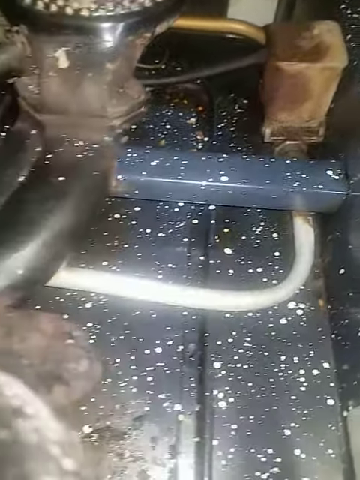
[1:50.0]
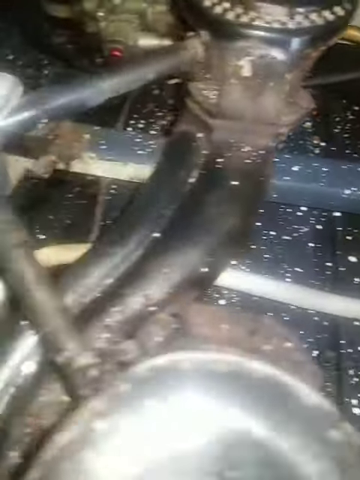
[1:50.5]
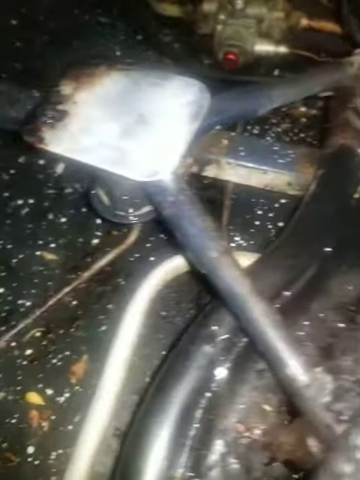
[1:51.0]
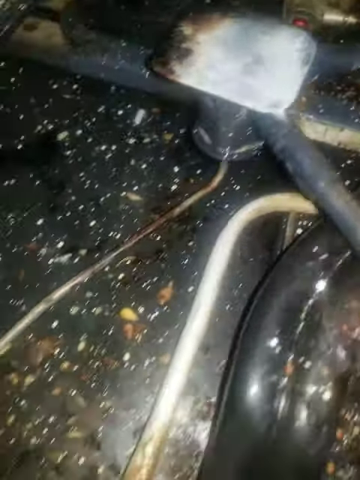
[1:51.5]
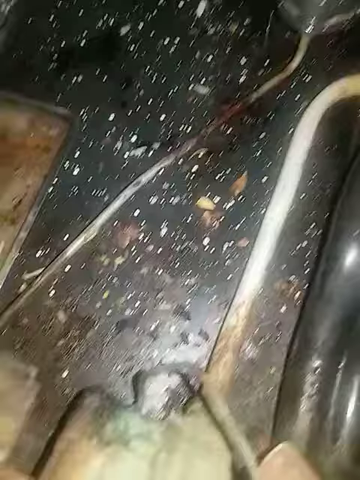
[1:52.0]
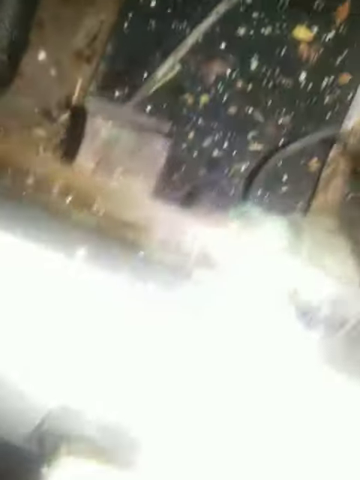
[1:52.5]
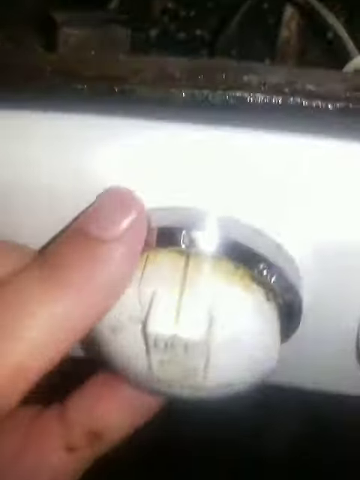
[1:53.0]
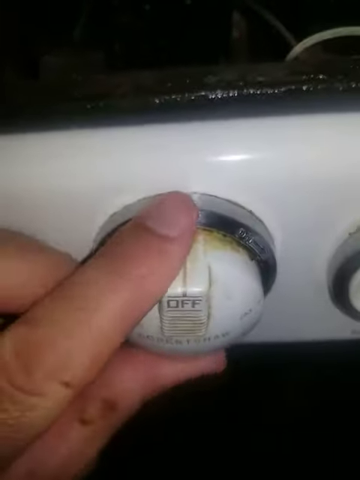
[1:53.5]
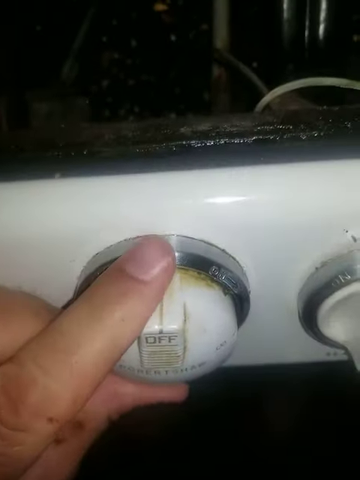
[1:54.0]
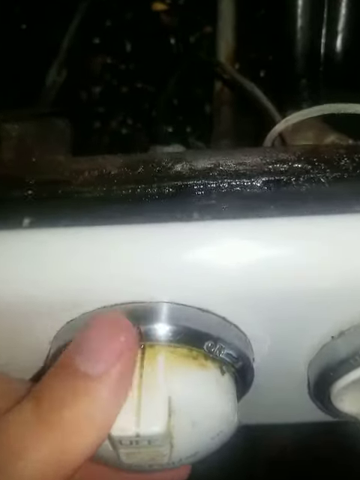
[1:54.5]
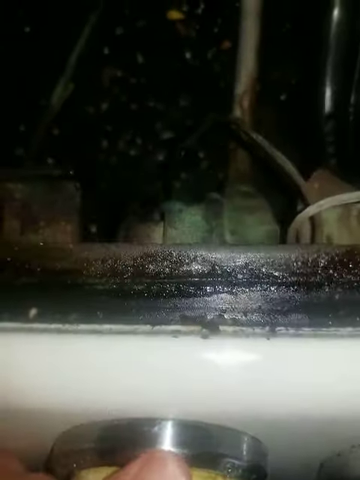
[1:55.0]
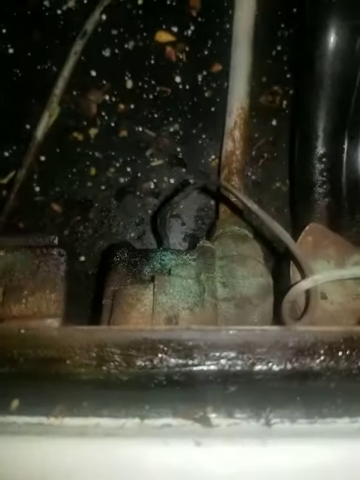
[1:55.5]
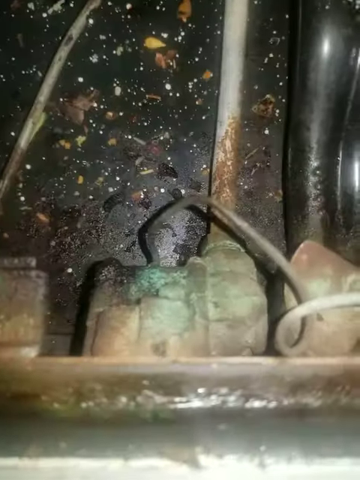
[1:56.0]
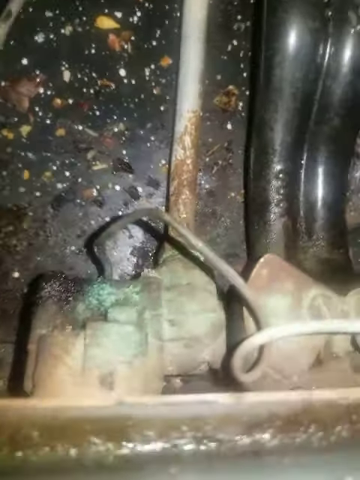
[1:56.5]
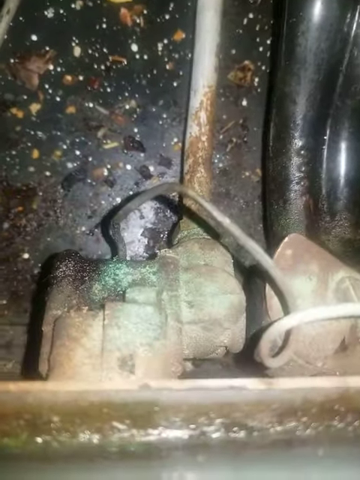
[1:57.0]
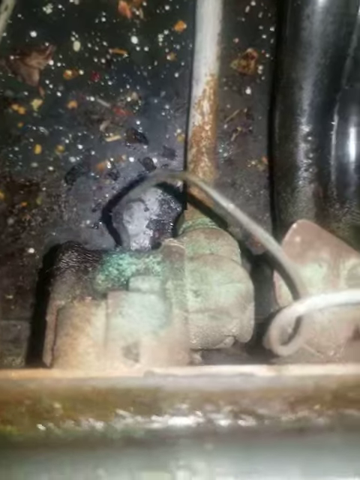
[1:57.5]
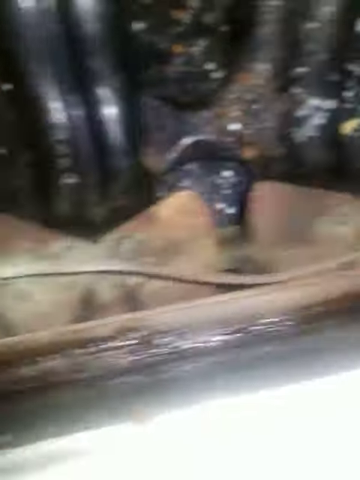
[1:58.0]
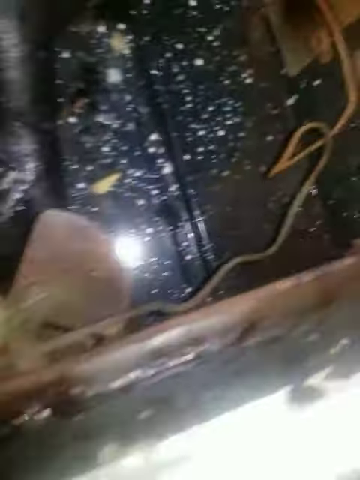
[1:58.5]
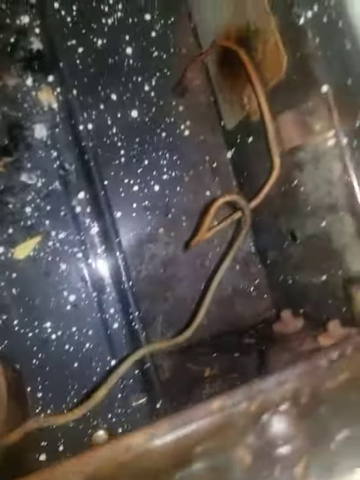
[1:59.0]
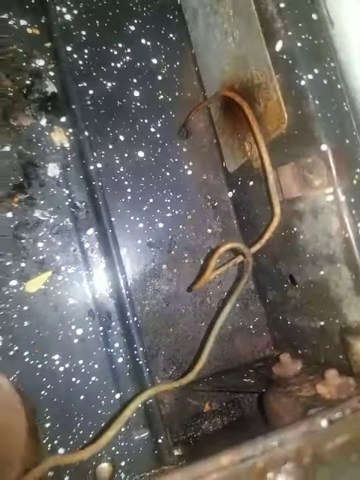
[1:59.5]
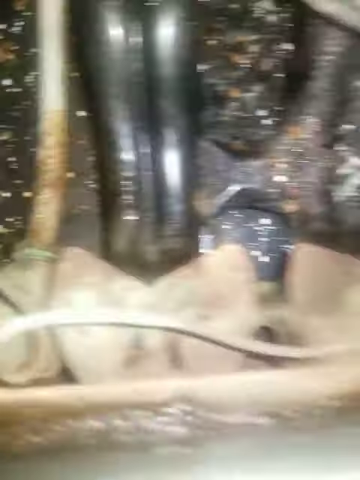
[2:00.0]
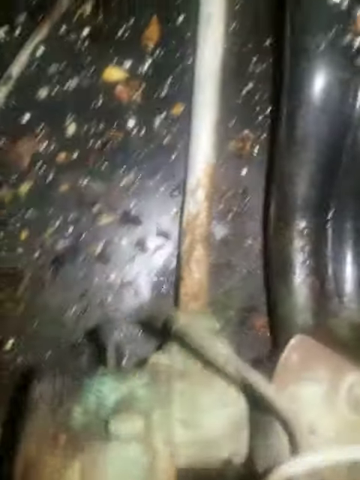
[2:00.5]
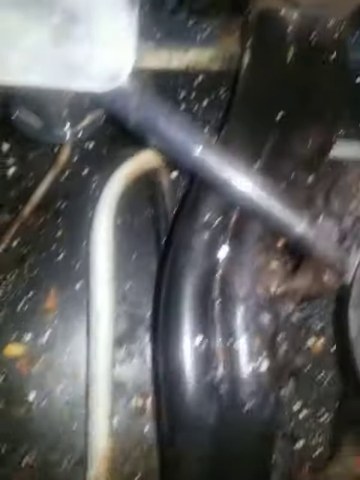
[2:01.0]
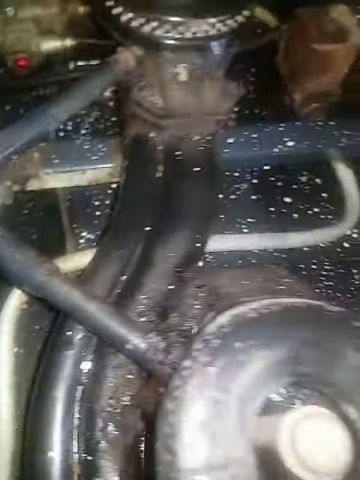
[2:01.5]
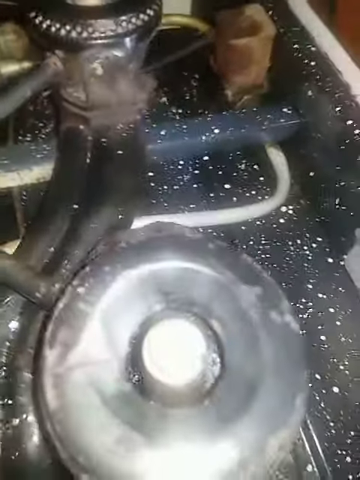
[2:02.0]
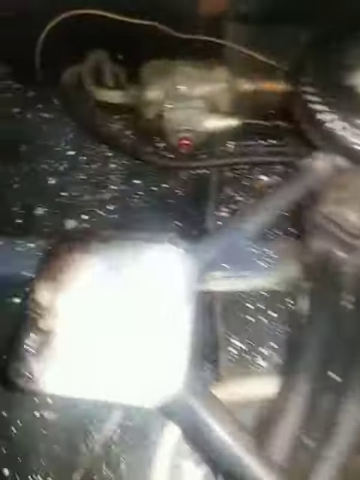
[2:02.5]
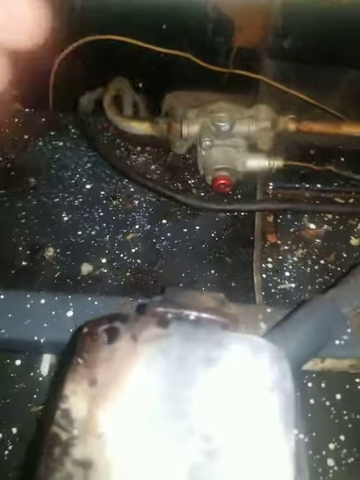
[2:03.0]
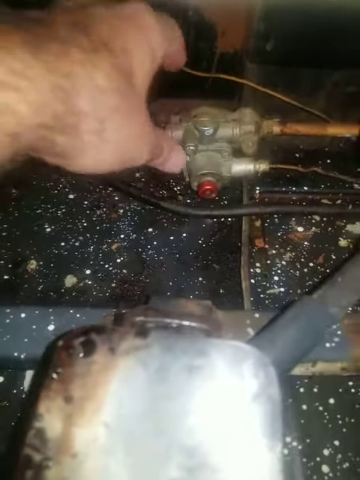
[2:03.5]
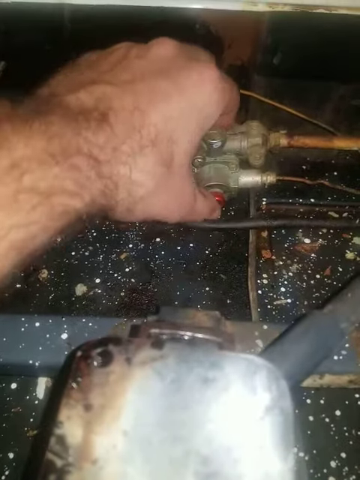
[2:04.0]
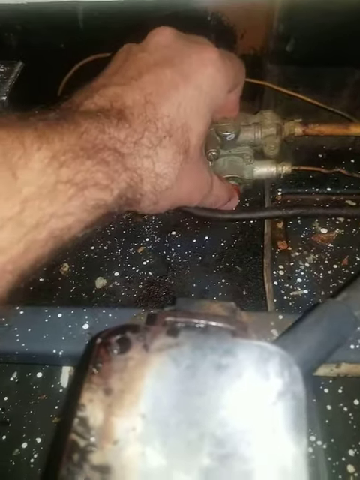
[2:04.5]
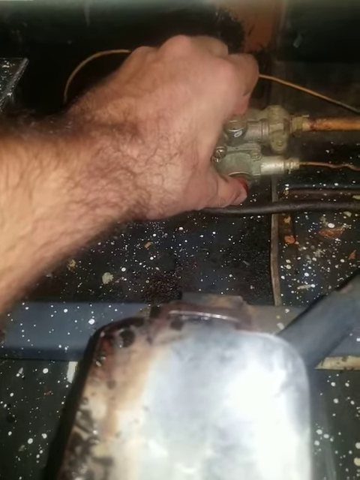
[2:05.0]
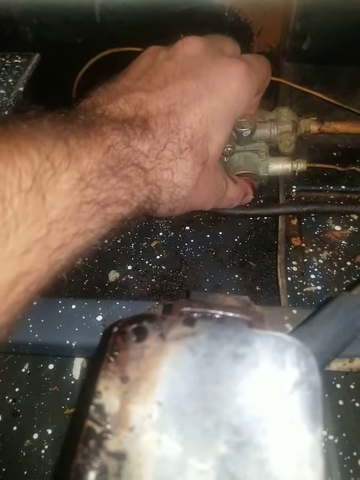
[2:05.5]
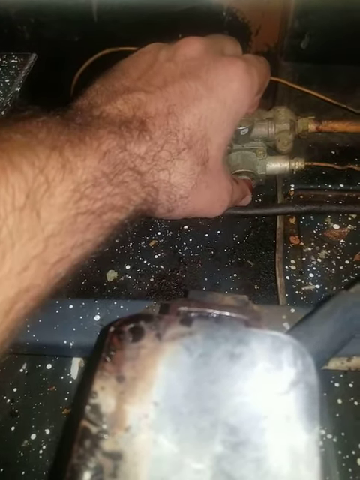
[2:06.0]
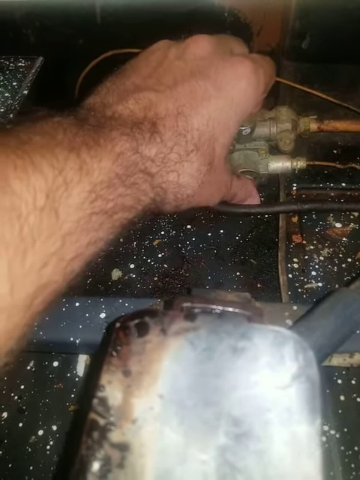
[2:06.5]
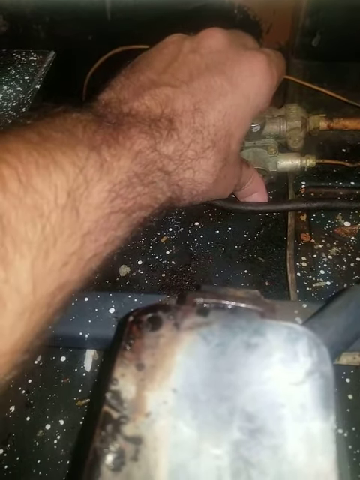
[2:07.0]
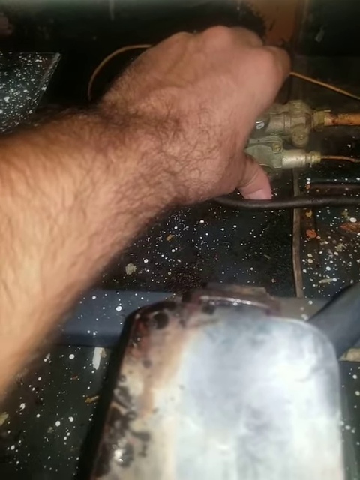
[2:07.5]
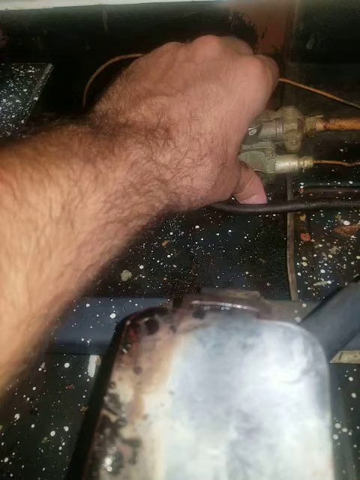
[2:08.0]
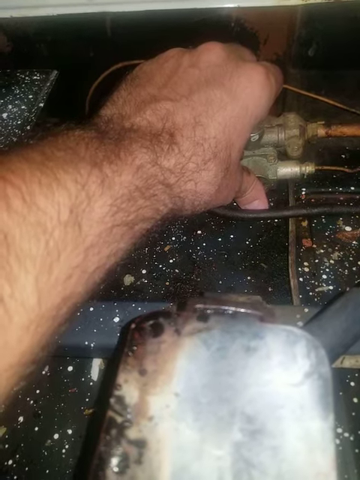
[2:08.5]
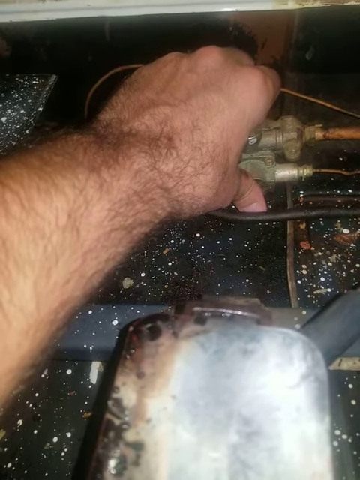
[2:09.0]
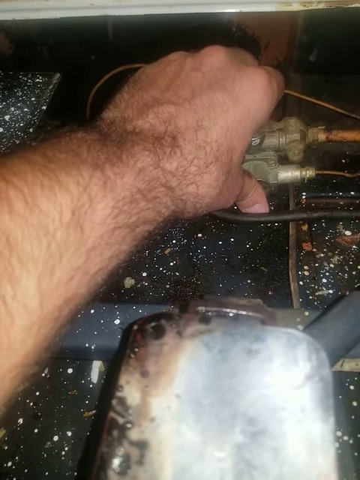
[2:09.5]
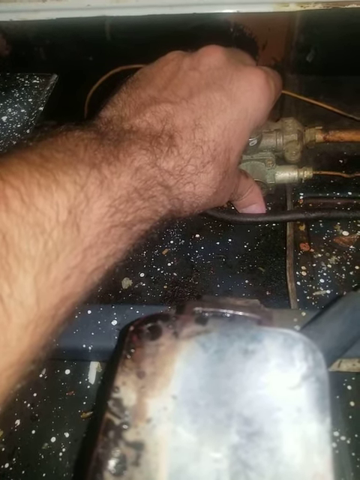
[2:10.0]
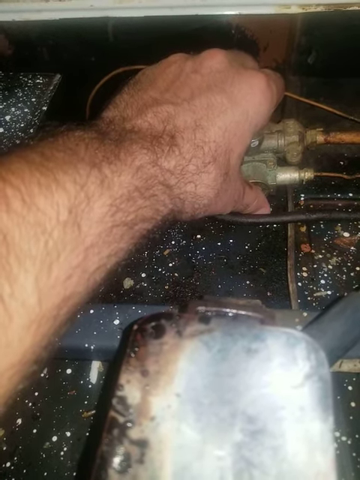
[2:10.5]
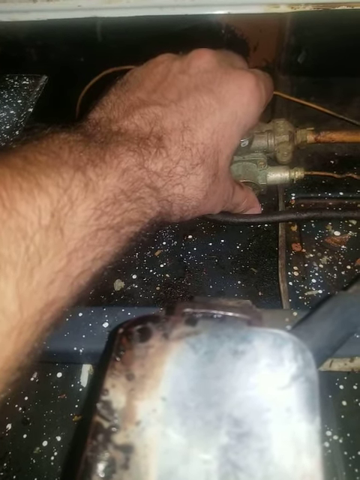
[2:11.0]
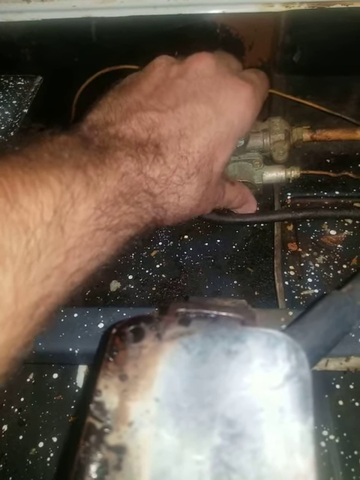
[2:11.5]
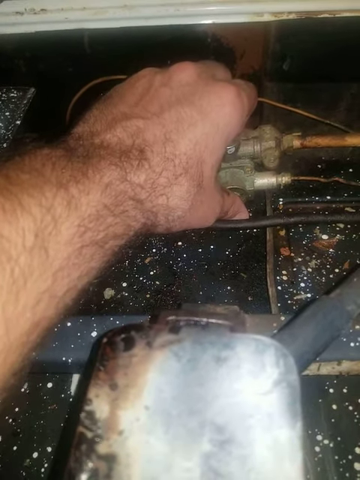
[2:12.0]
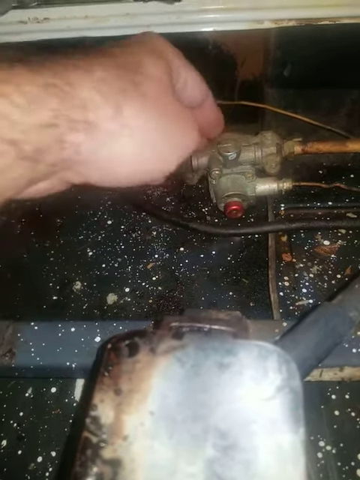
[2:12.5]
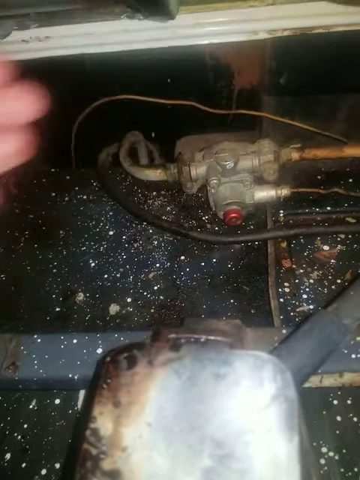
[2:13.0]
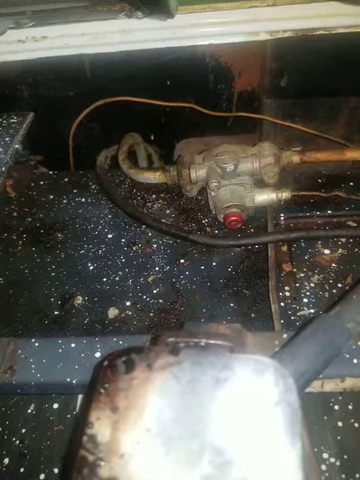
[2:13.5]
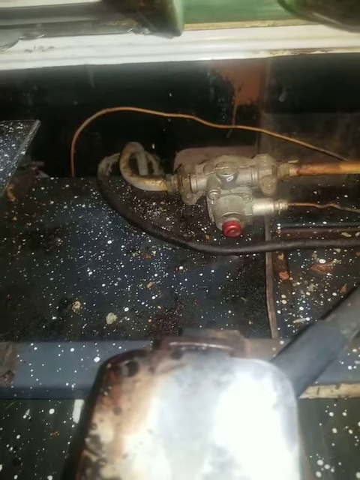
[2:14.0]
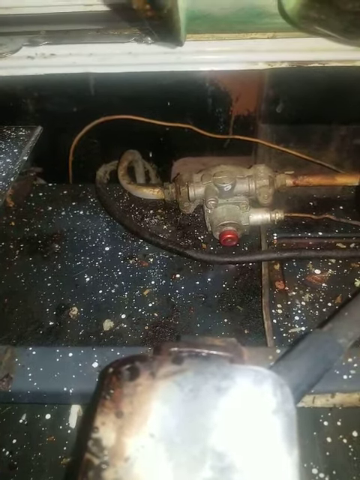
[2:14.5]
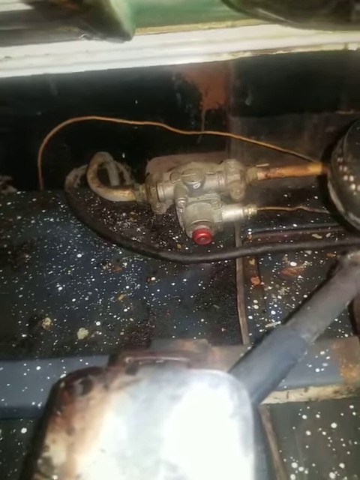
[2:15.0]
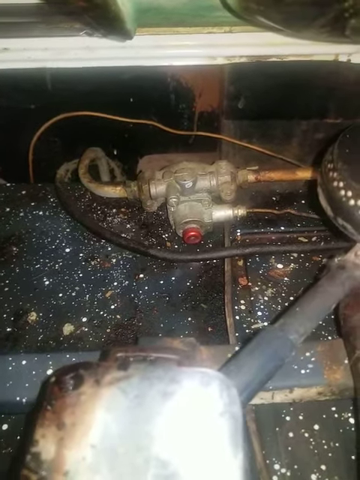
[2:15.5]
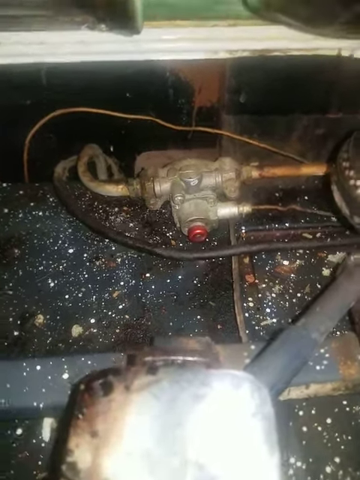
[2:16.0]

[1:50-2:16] The camera looks at the almost cube-like rusty piece of the device, then pans along the pipes or cables to a knob, which the man tries to use to turn something on; it looks like he cannot even move it. He looks at the cables, then pans through the disassembled stoves to the metal piece with cables going in and out and the red button on it. He reaches out his hairy arm and pushes the button with his fingers, with his left thumb, a few times until he gives up. The video ends on a view of the disassembled bottom of the stoves, which is extra dirty and looks full of oil.